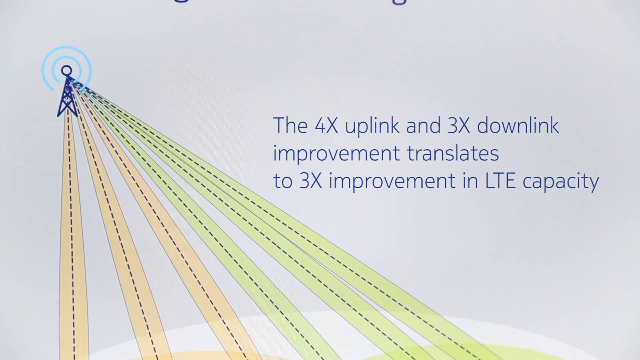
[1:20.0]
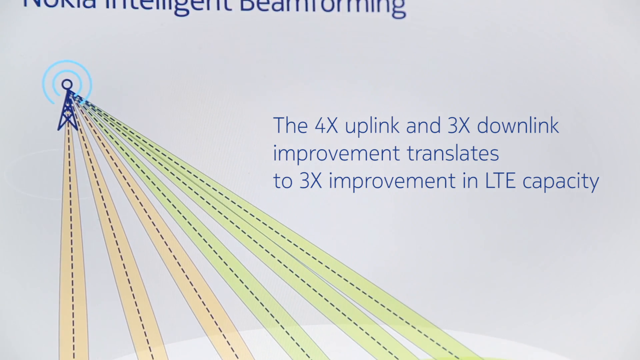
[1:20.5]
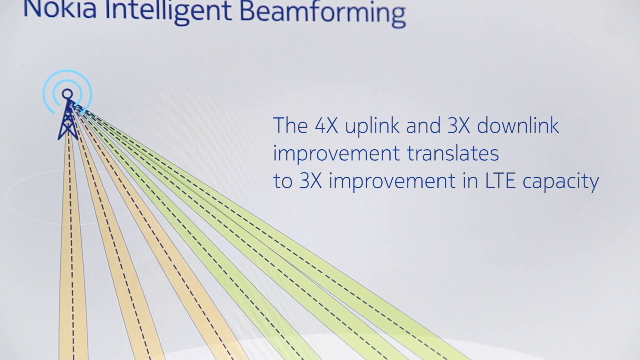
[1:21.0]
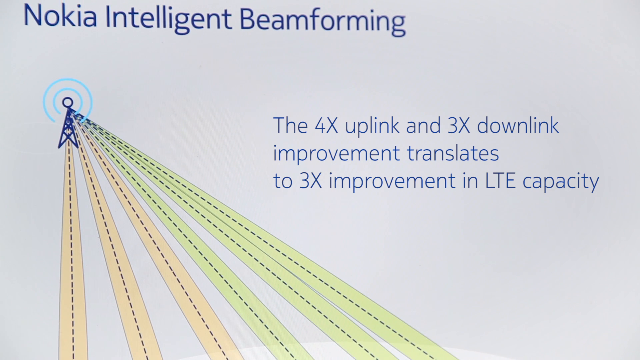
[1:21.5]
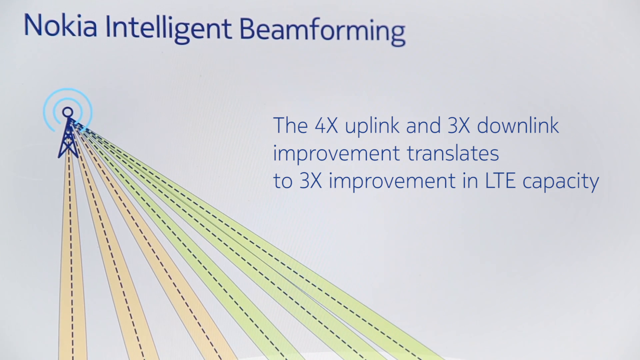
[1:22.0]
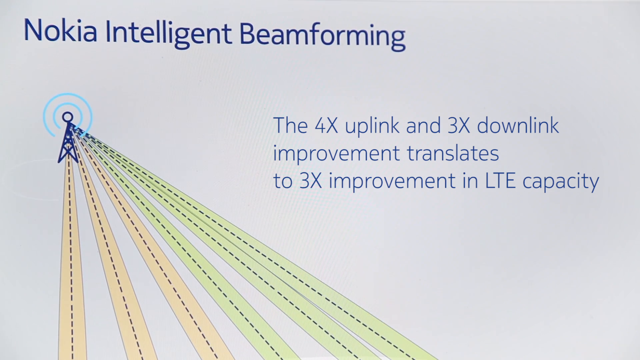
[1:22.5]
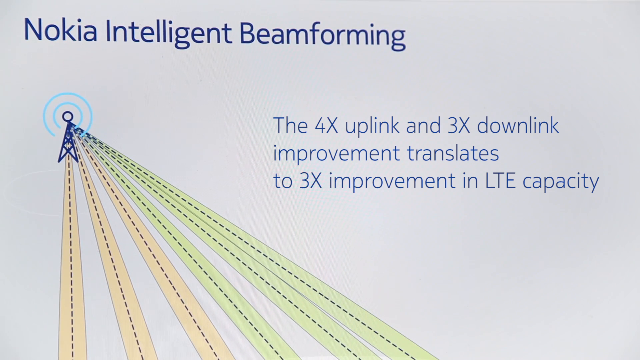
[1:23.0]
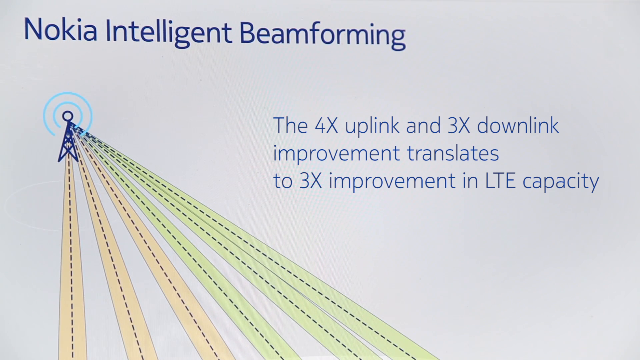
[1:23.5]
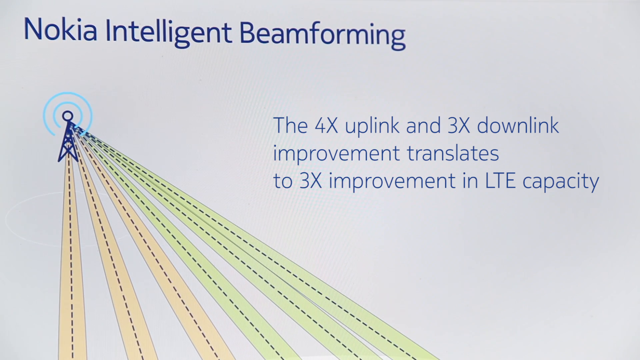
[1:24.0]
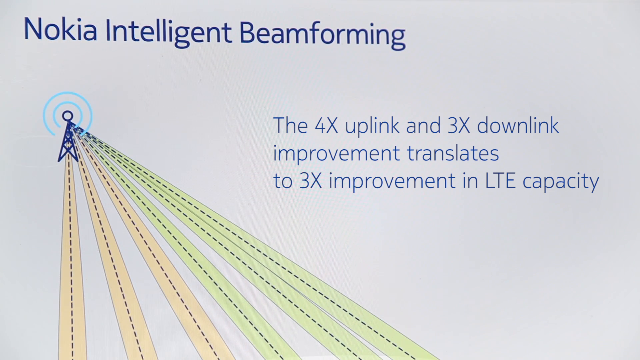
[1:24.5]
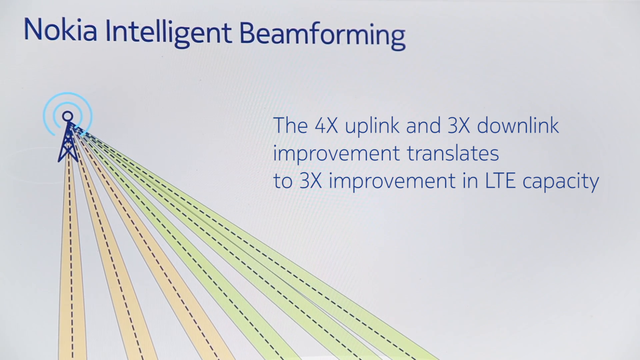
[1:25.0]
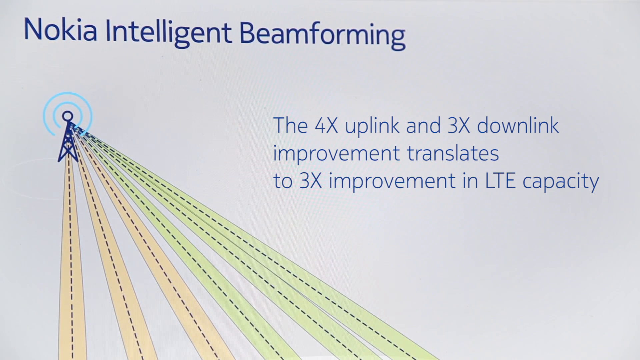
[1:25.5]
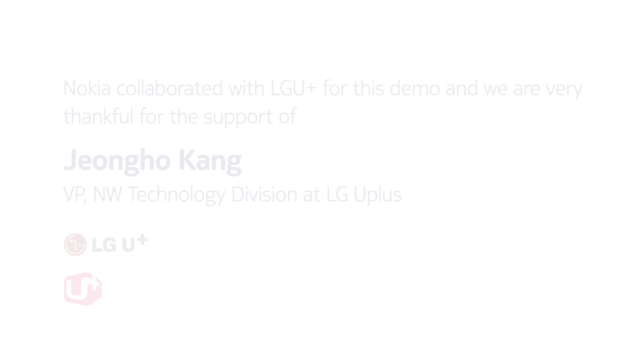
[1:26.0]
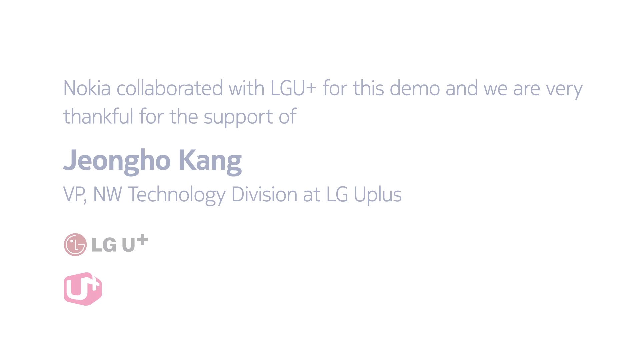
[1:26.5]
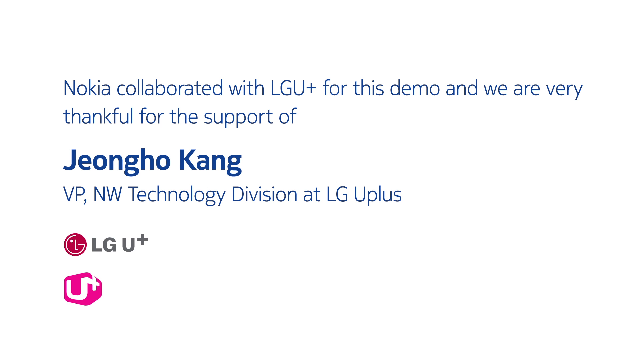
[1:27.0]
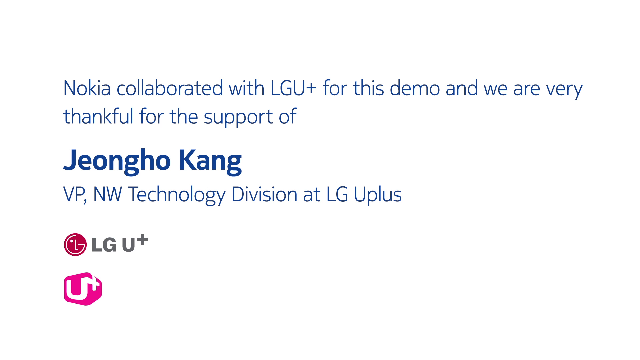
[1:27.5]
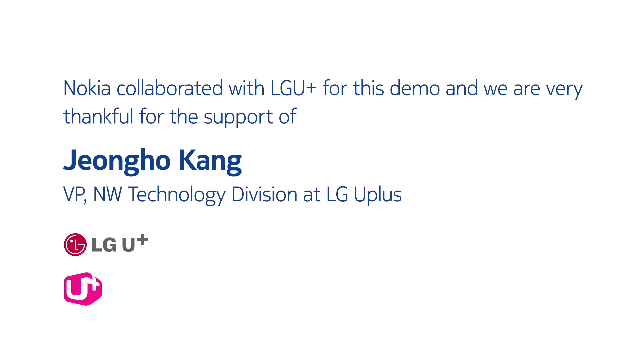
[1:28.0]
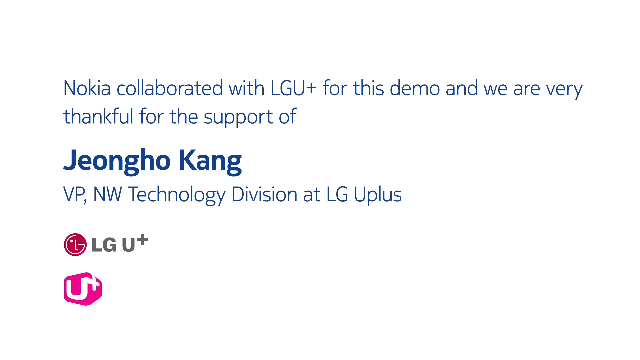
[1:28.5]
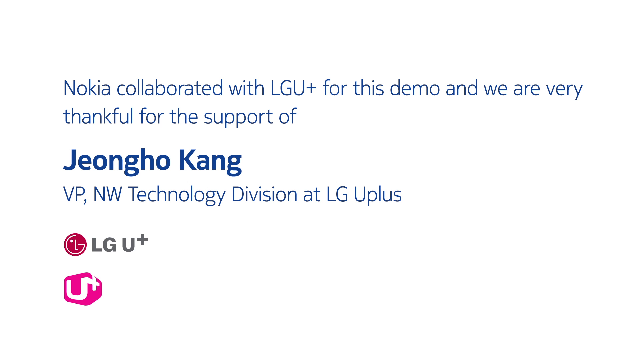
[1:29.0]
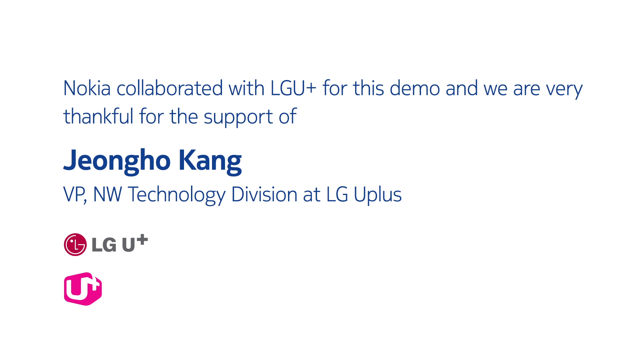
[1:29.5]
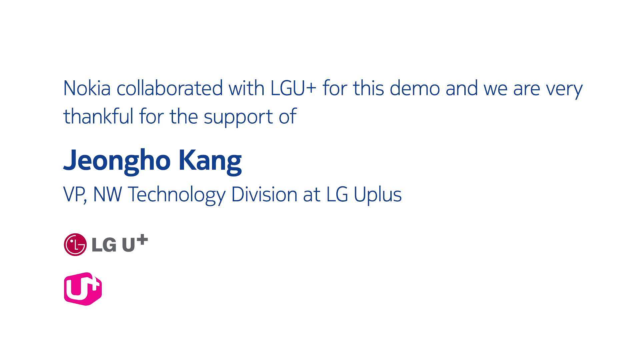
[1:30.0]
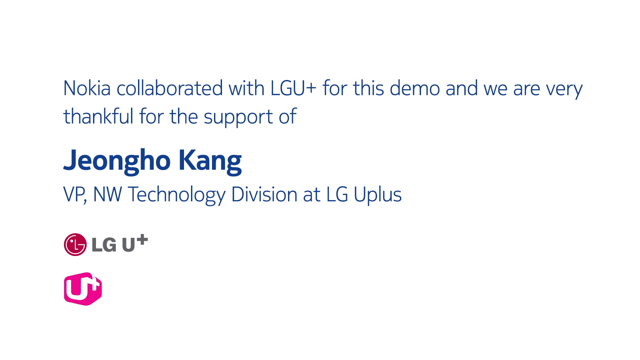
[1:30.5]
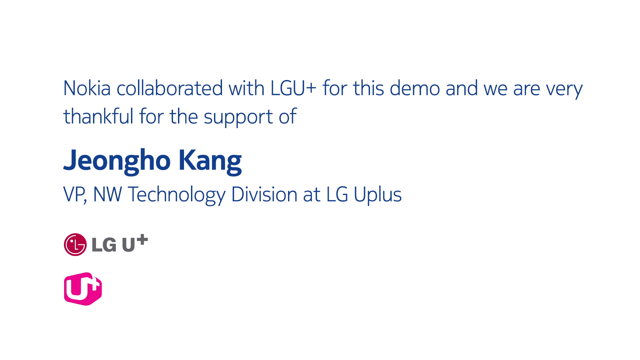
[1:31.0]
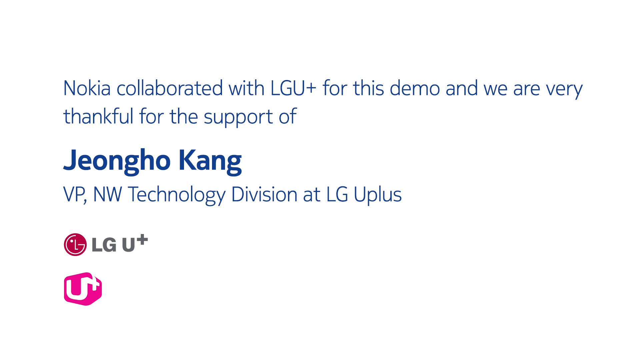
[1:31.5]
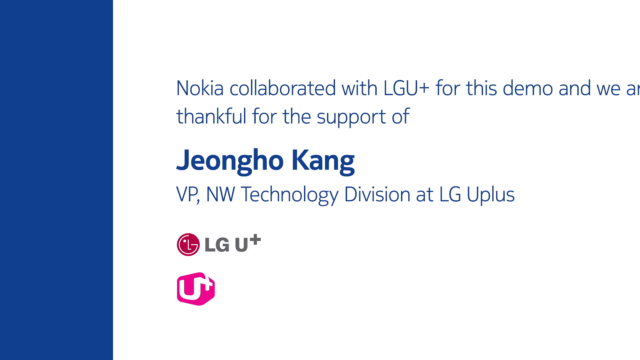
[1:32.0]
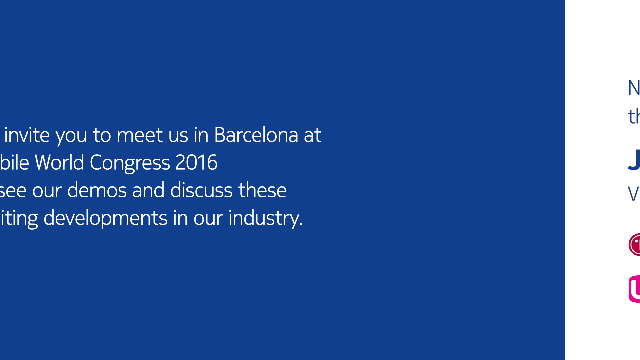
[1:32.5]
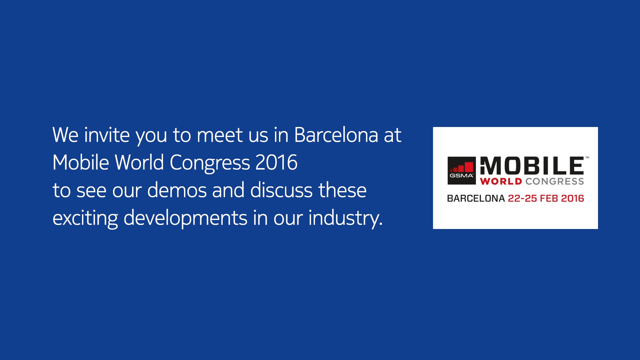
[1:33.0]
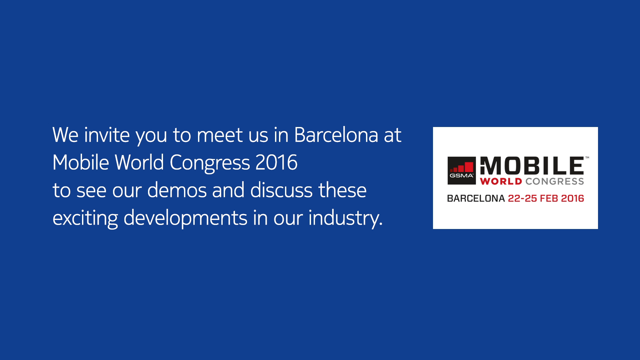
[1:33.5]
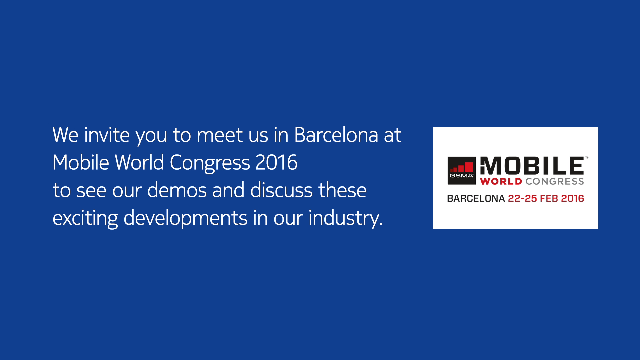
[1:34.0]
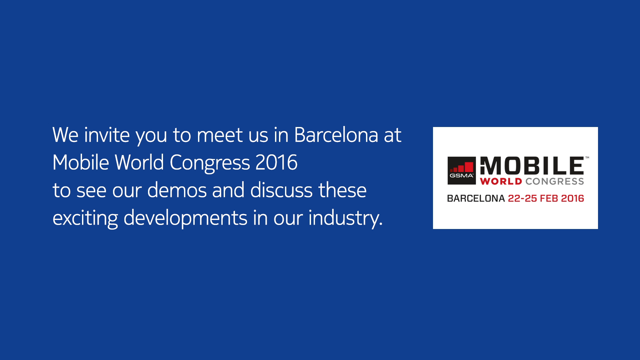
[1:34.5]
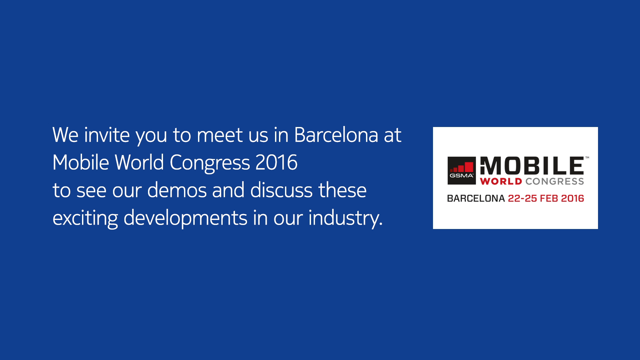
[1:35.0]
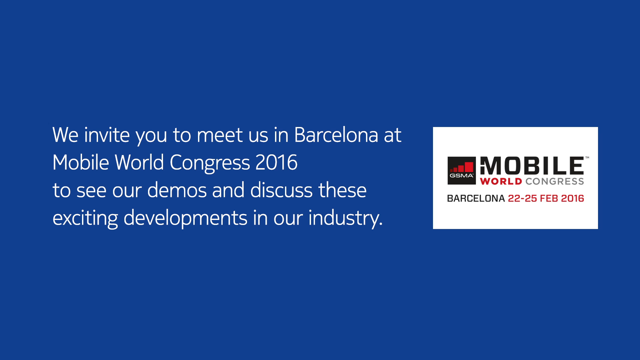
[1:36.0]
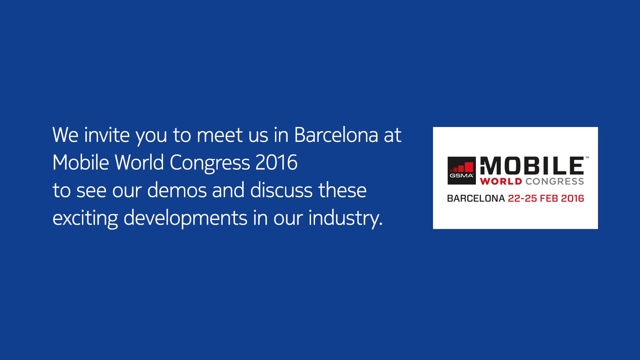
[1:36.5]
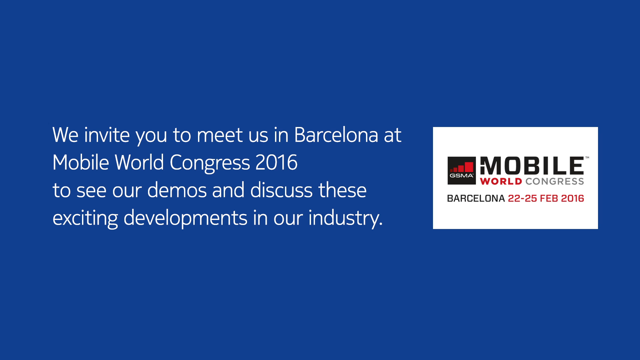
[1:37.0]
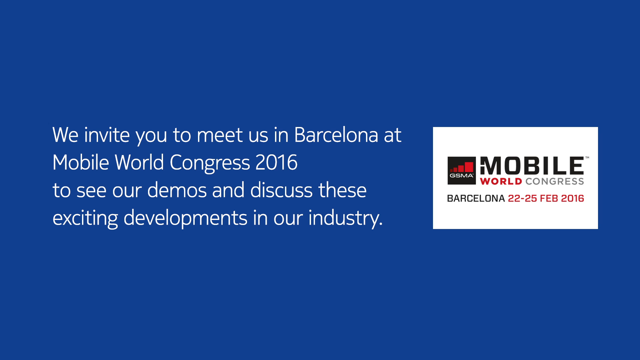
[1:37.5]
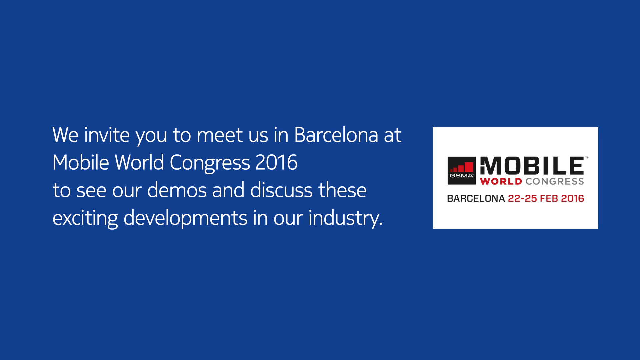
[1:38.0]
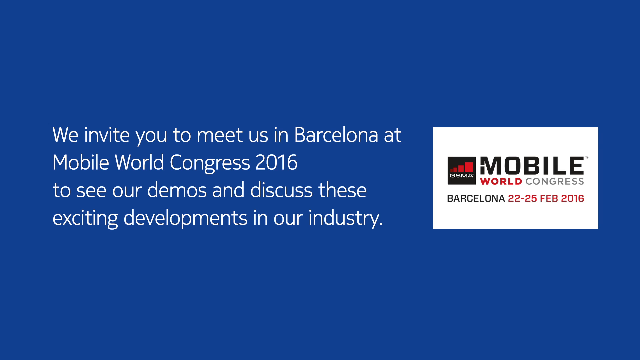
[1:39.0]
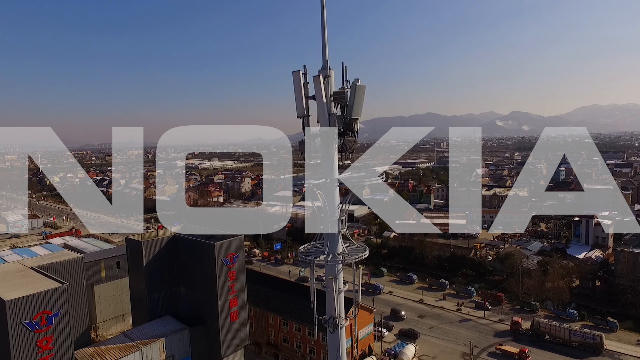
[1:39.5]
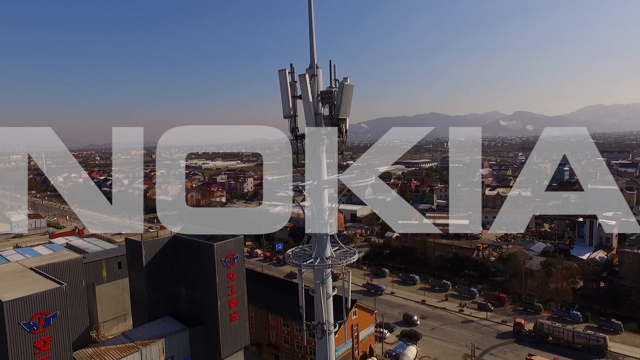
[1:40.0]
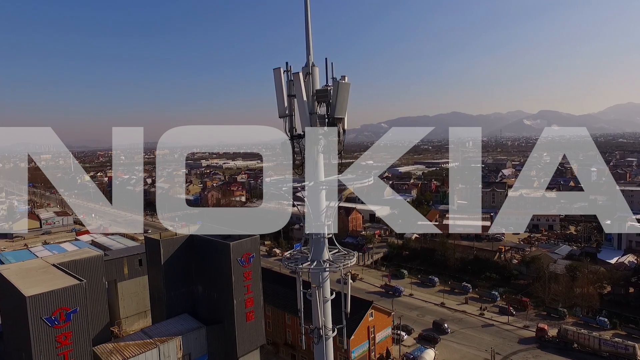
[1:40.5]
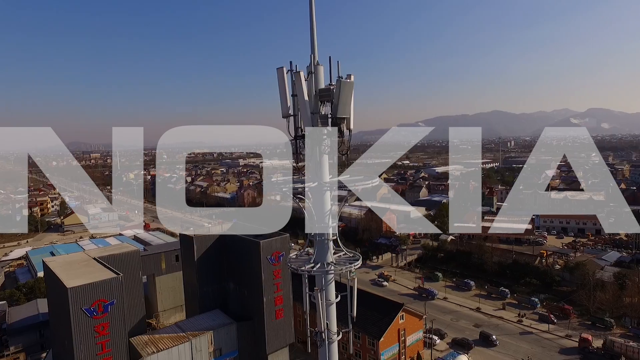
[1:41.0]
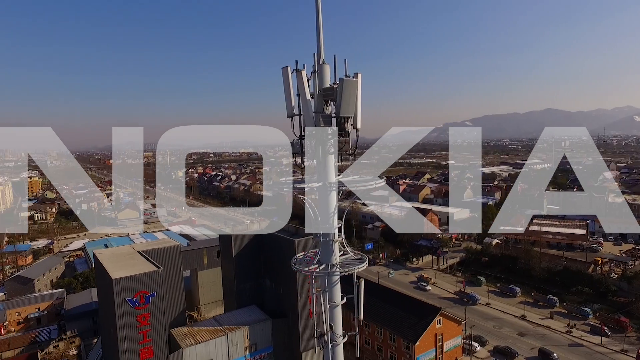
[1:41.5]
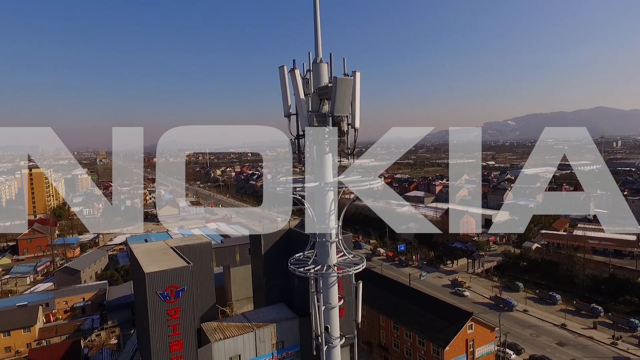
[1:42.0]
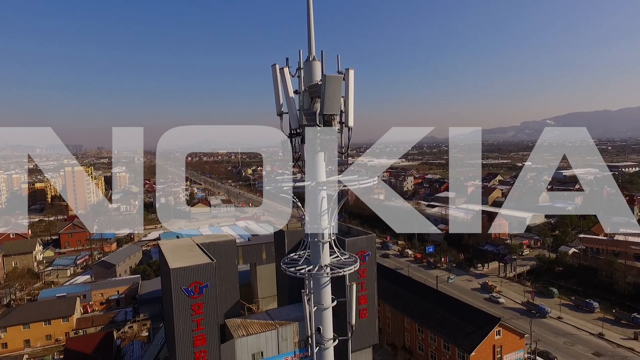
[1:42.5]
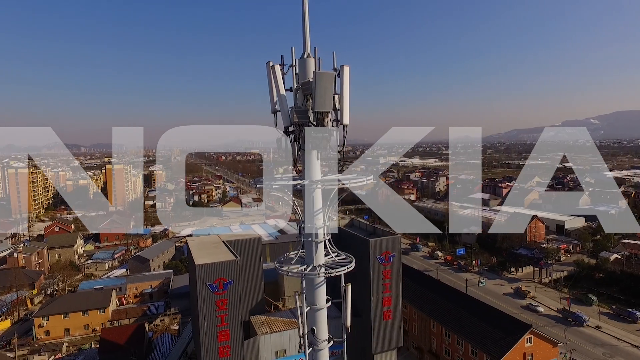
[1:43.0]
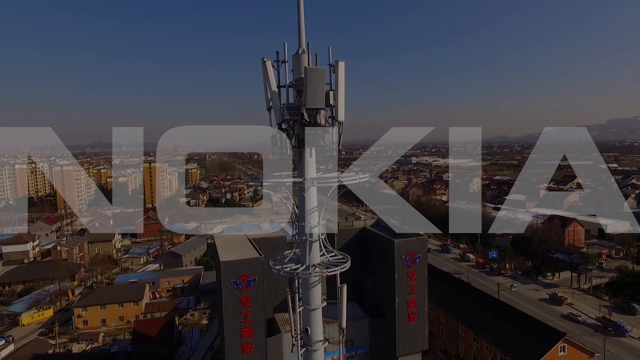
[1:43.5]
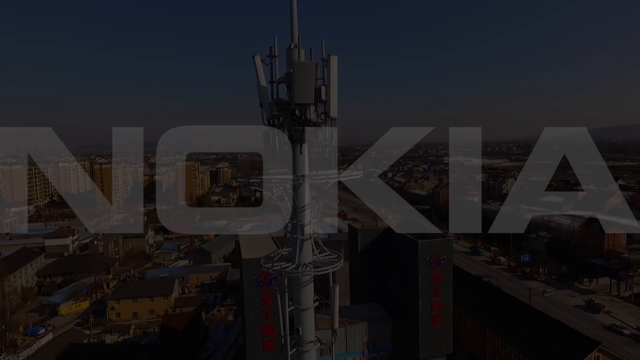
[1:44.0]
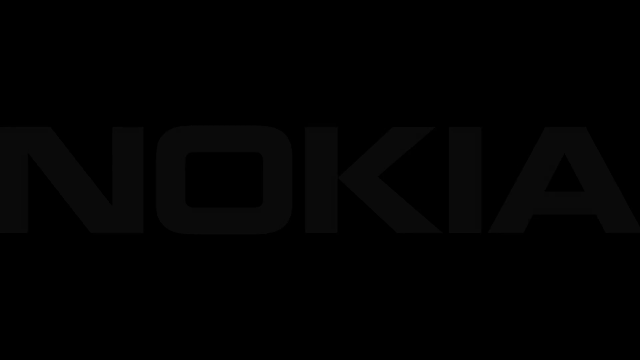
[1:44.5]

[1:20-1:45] The satellite is shown with six dotted lines coming down from it to six different cell phones. At the top right, dark blue text says "Nokia Intelligent Beamforming", and to the left of the dotted lines blue text reads "the 4X uplink and 3X downlink improvement translates to 3X improvement in LTE capacity". The screen switches to text starting a little above the middle in blue letters: "Nokia collaborated with LG U+ for this demo and we are very thankful for the support of", followed in dark blue letters by the name "JEONGHO KANG". Below the name, in smaller regular blue letters, it says "VP, NW technology division at LG U+", and beneath that line, at the right, is the red LG insignia with "LG U+" next to it. The screen then turns all blue, and on the right, white letters read "we invite you to meet us in Barcelona at Mobile World Congress 2016 to see our demos and discuss these exciting developments in our history." To the left is a white square containing "MOBILE" in black letters, "WORLD" in red, "CONGRESS" in light blue, "BARCELONA" in black, and "22-25 FEBRUARY 2016" in red. The video ends with the cityscape again, the satellite centered in the middle of the screen, and across the middle large white, see-through letters spelling "Nokia".